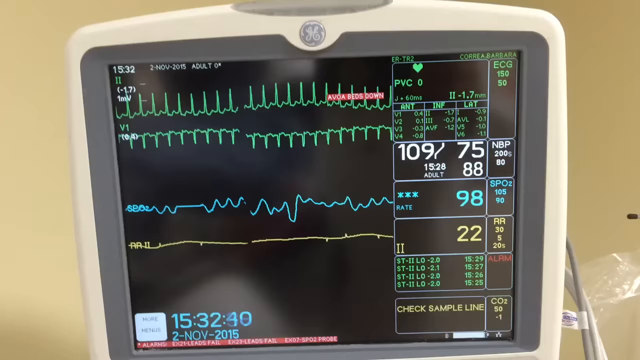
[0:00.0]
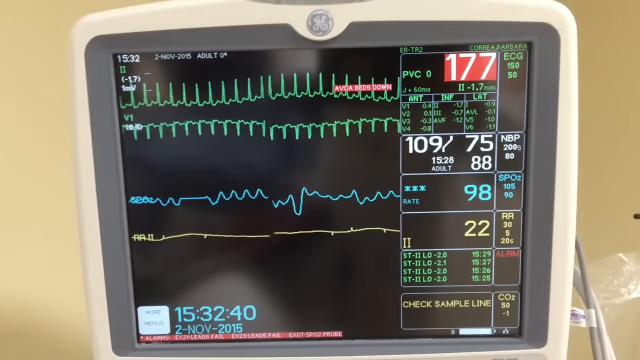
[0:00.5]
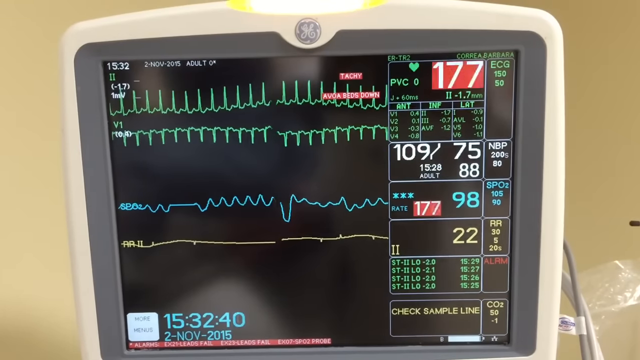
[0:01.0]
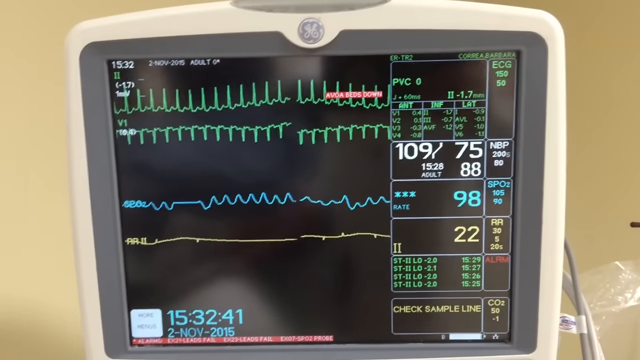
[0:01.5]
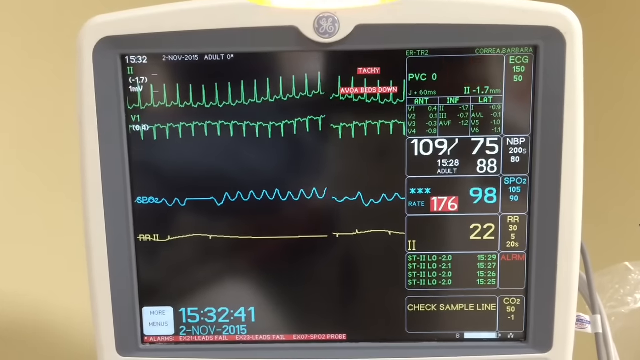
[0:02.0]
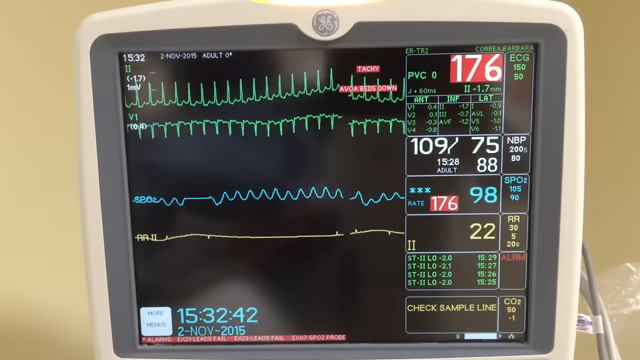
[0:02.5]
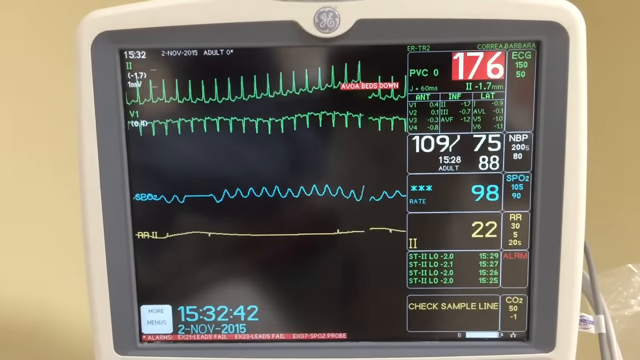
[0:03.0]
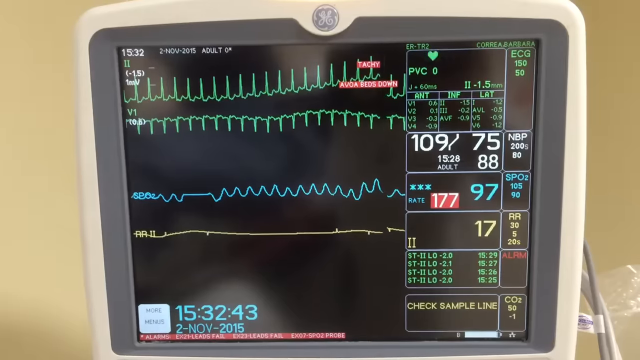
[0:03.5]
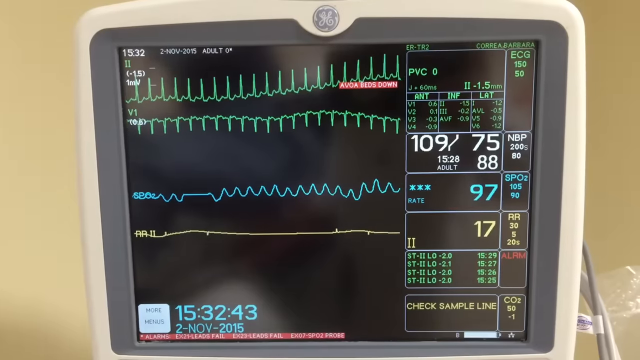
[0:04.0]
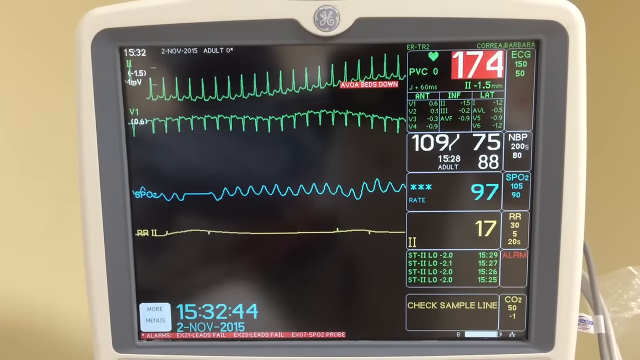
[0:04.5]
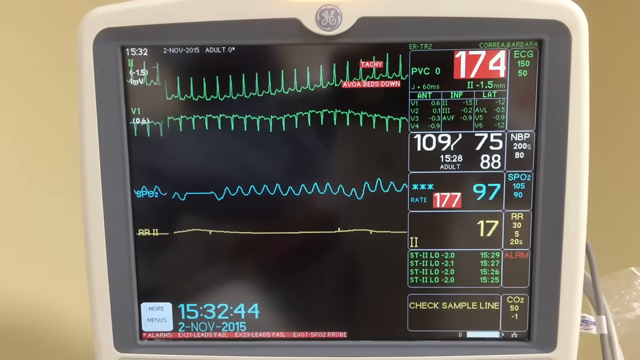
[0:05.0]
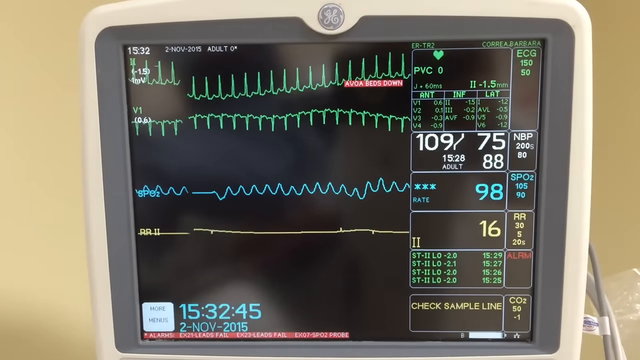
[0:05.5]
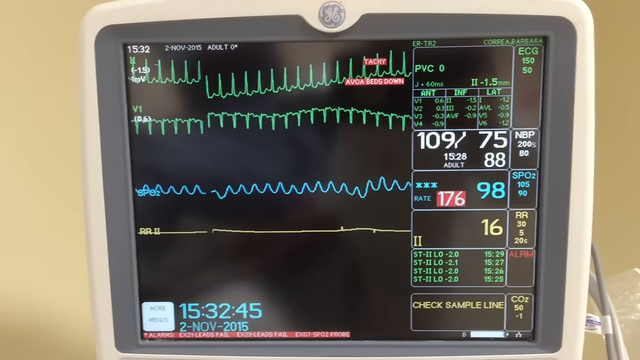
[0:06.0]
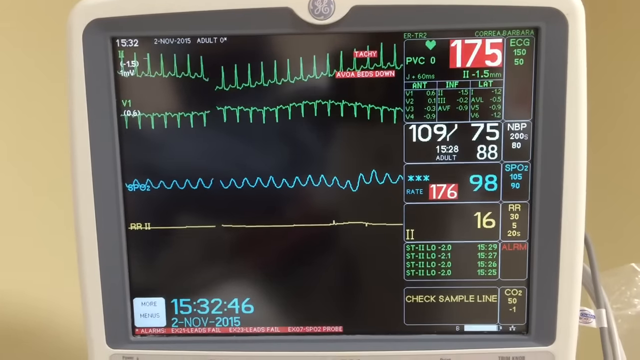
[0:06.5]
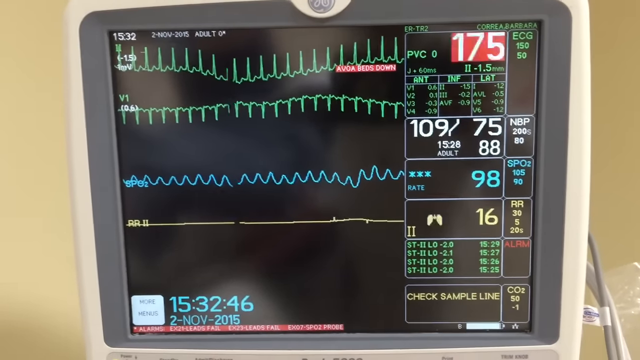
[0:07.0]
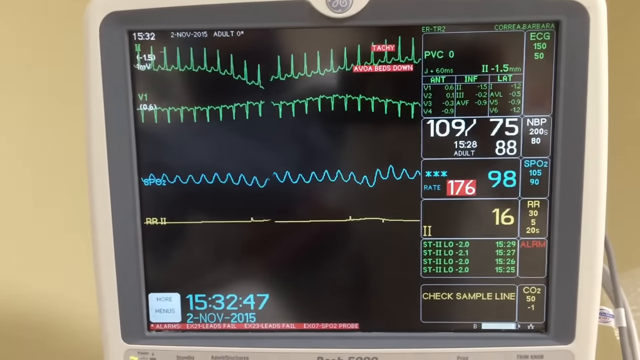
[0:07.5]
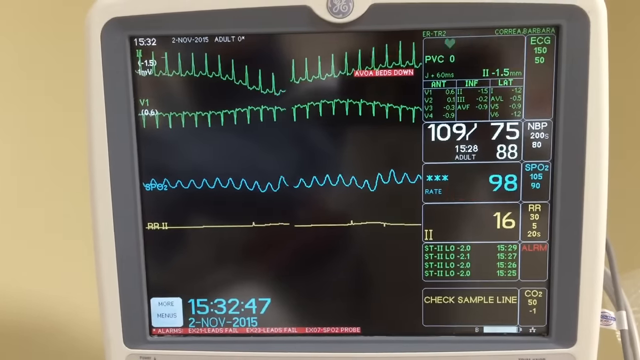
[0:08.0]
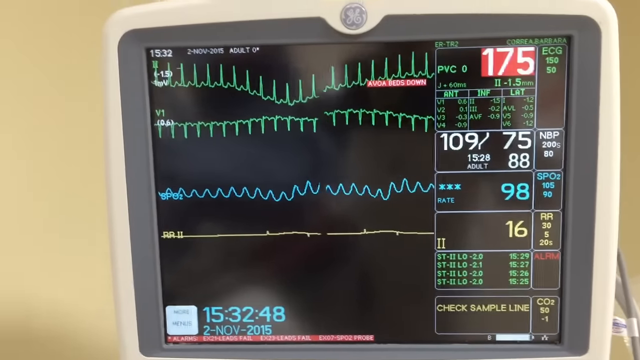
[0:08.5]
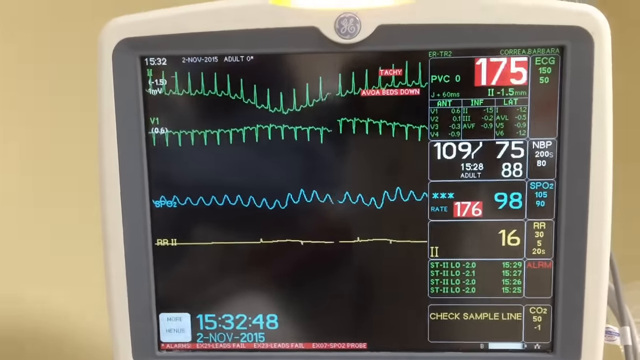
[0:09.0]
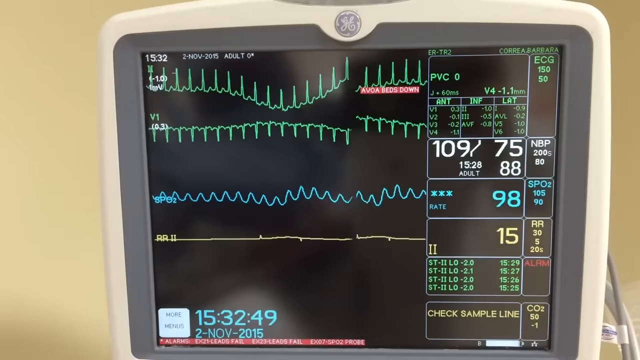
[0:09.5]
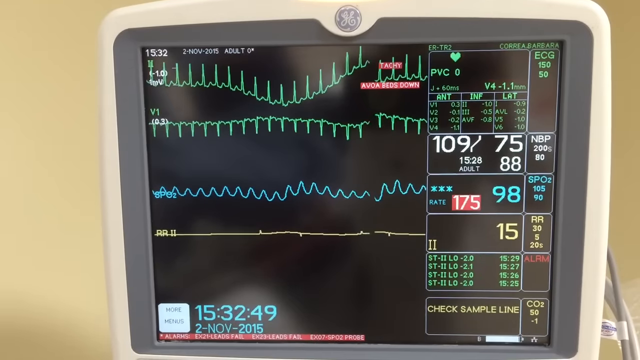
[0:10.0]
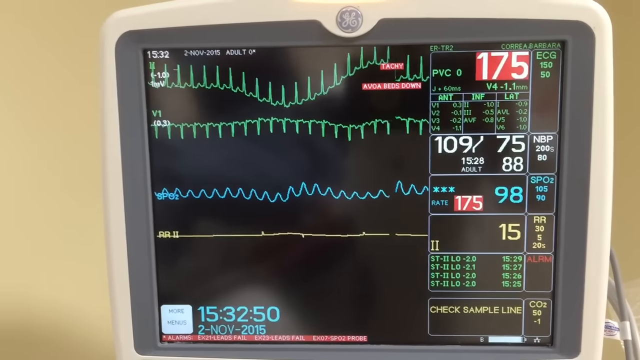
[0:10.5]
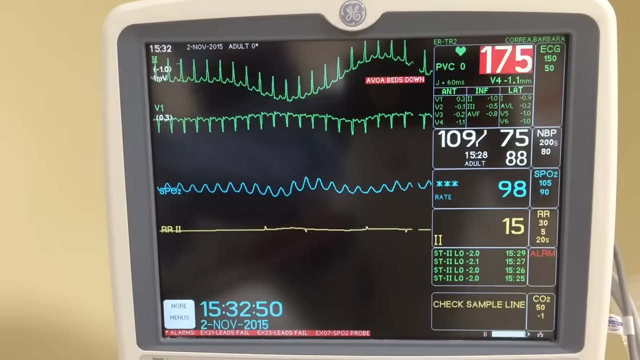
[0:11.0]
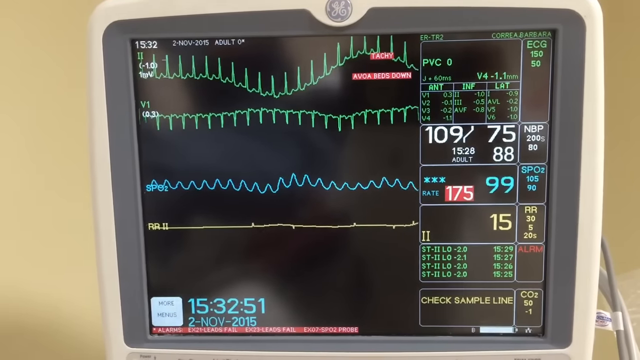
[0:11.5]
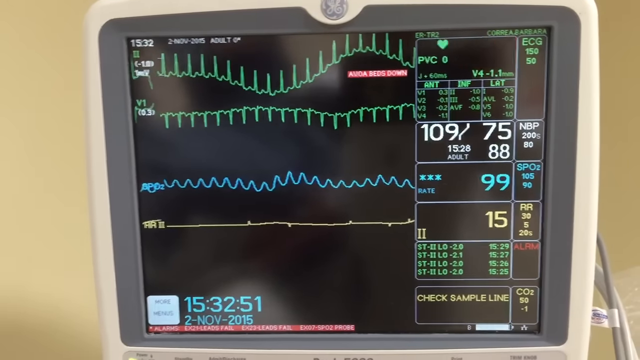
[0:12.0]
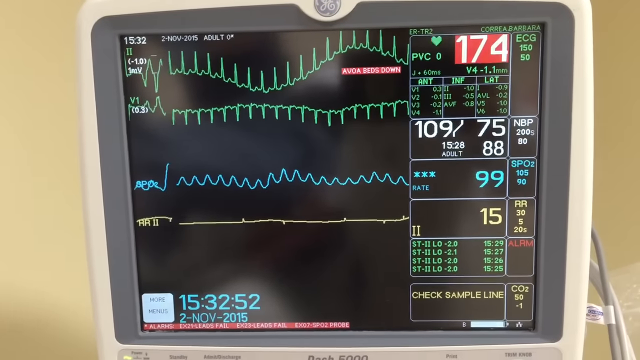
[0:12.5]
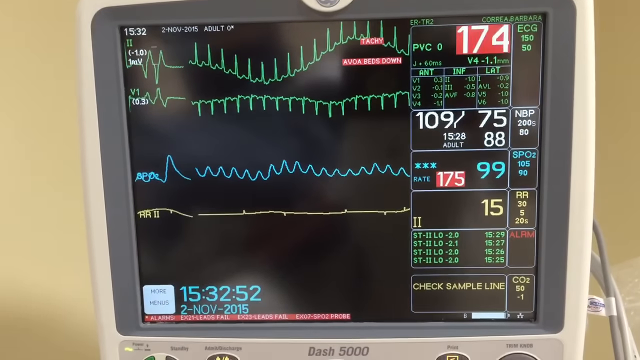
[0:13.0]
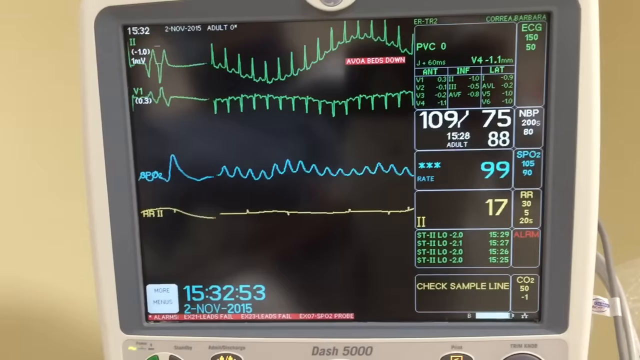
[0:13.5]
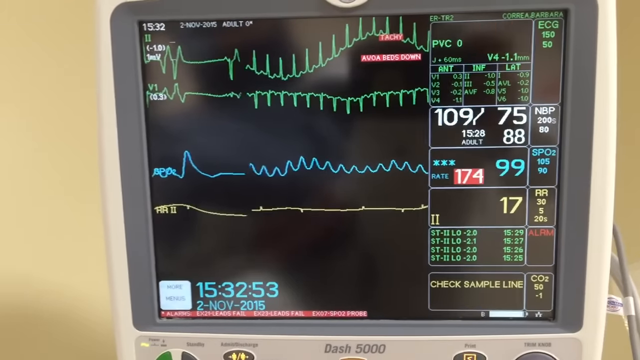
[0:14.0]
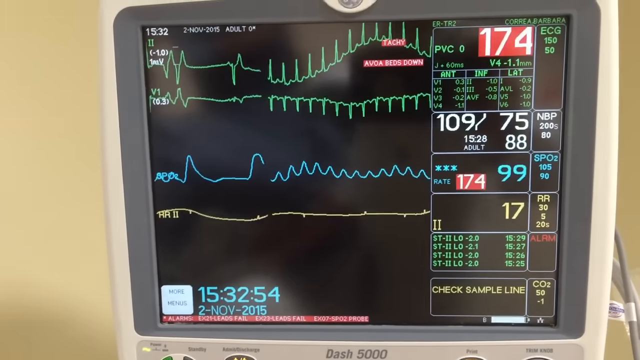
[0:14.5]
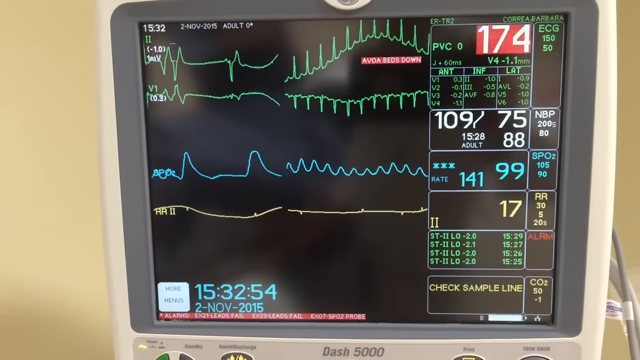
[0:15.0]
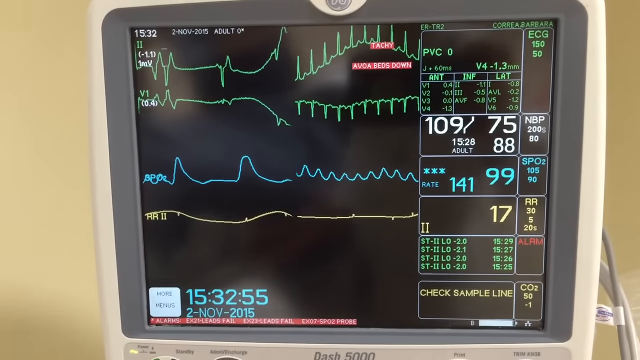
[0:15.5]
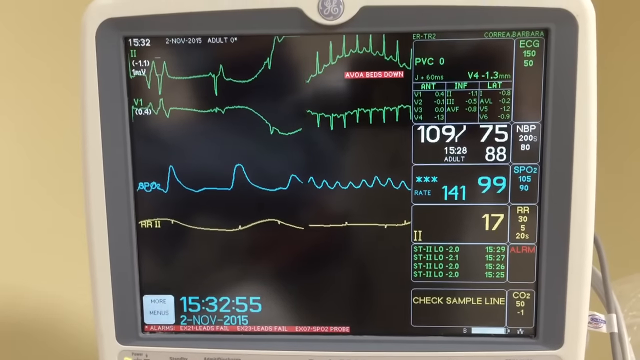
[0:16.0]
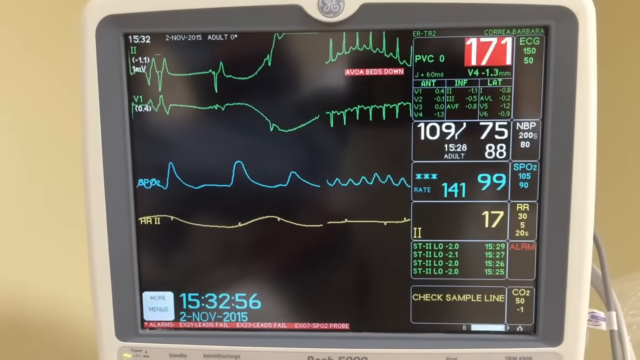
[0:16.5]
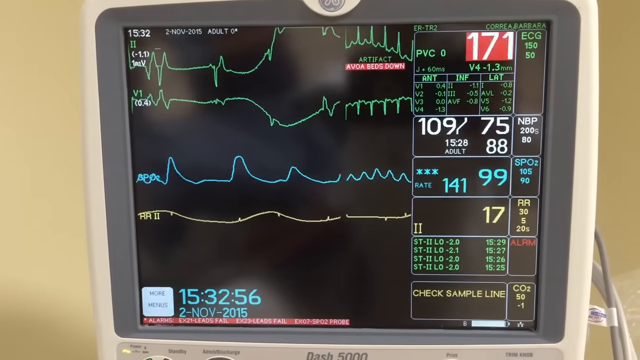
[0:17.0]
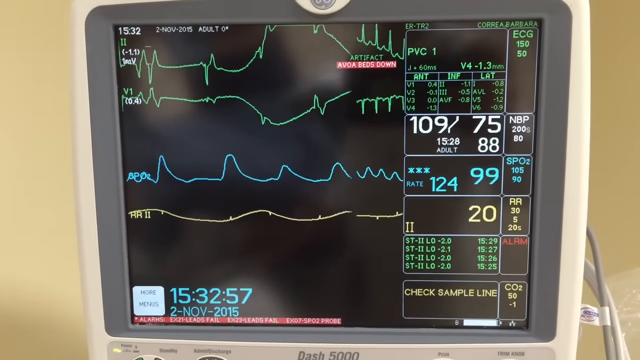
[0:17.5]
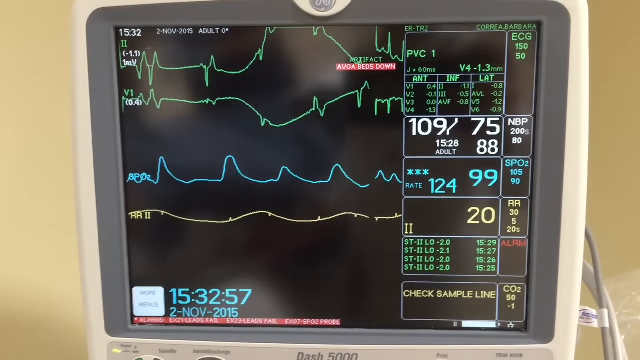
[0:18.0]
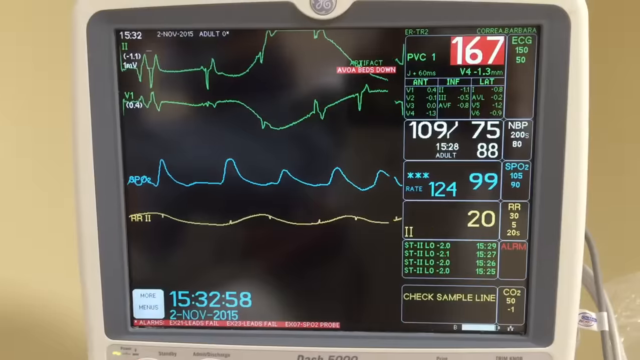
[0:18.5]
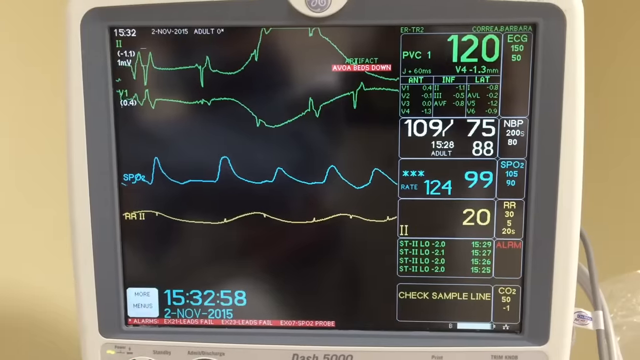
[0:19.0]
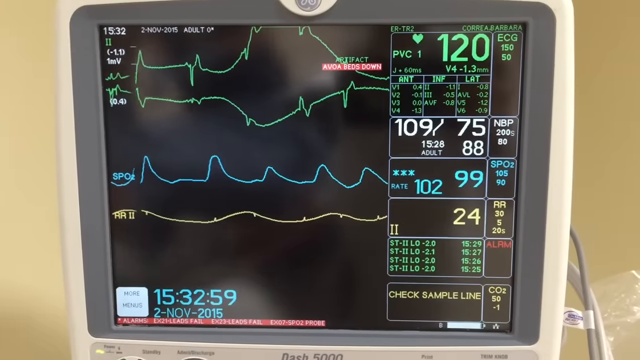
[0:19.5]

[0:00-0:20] The video opens on a hospital vital-signs monitor screen displaying heart rate, oxygen, blood pressure and other readings, along with graphs tracing the heartbeat, oxygen and blood pressure. At first a flashing red 175, then 174, appears at the top, the number also flashes lower down, and a tachycardia event is indicated. The alert then seems to settle down, or perhaps someone turns it off, and the screen shows nothing; no numbers appear.